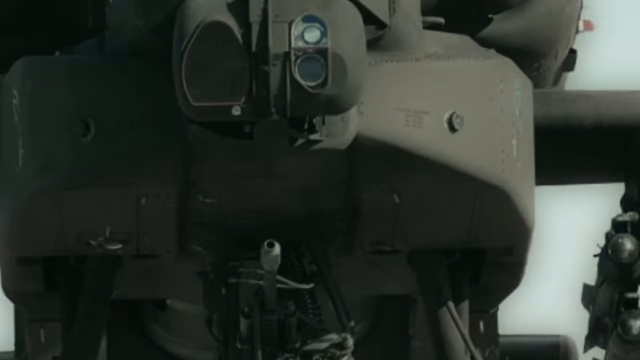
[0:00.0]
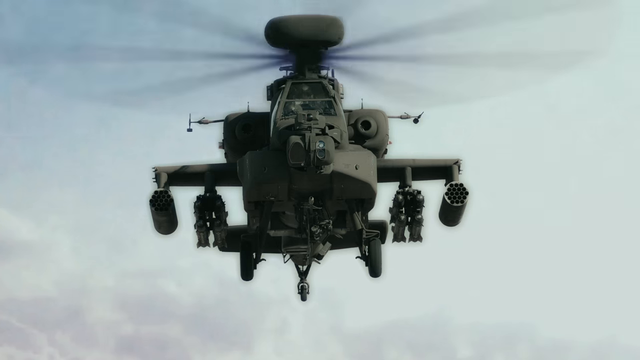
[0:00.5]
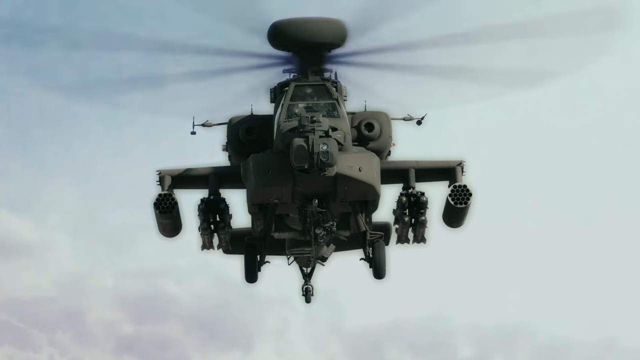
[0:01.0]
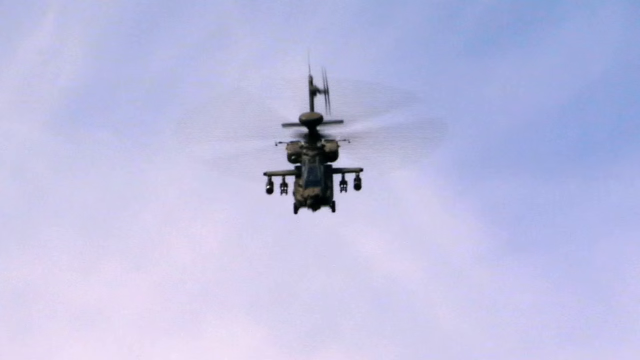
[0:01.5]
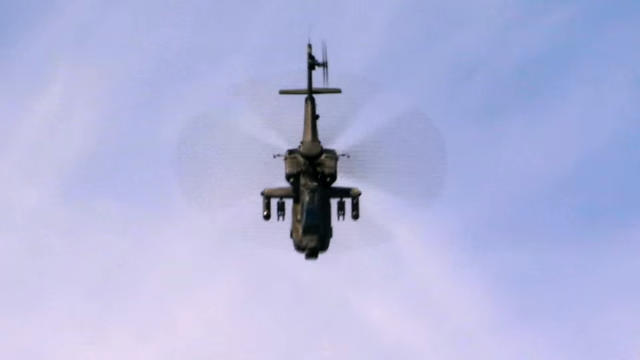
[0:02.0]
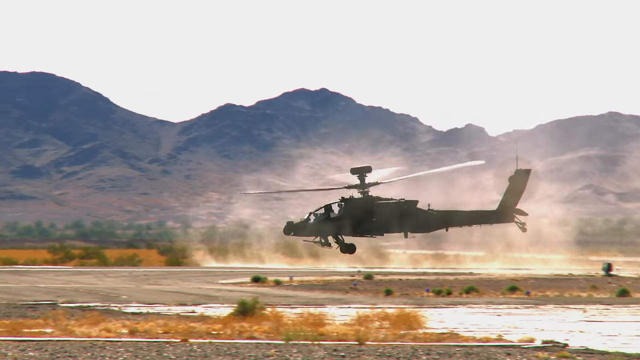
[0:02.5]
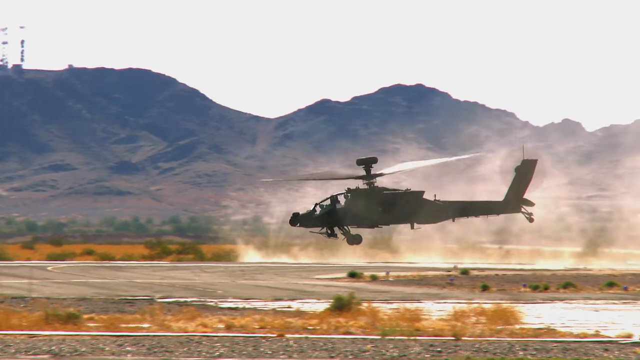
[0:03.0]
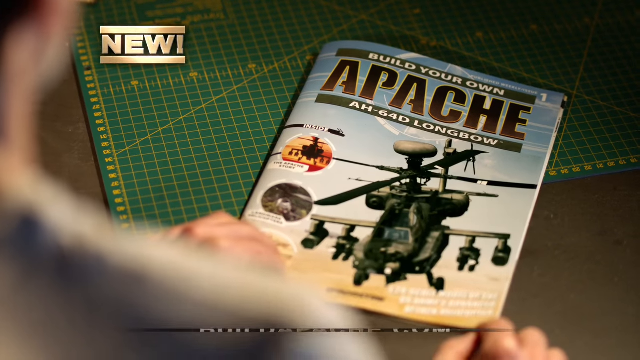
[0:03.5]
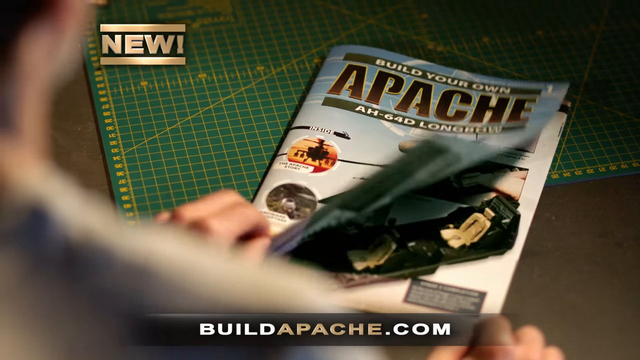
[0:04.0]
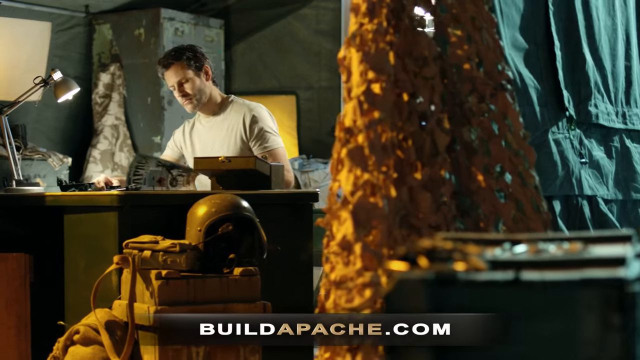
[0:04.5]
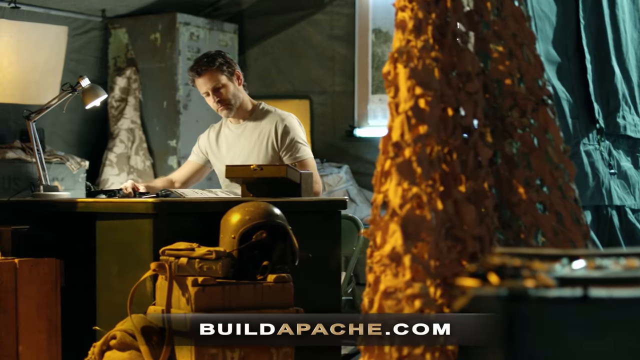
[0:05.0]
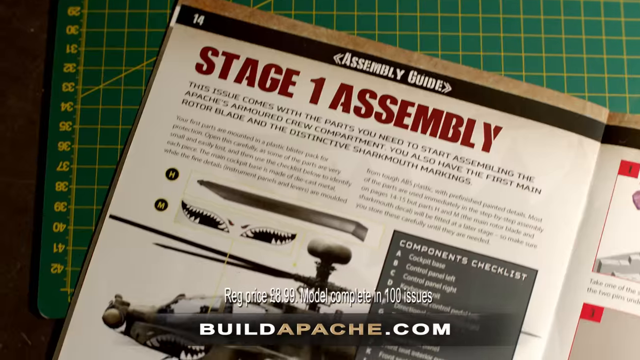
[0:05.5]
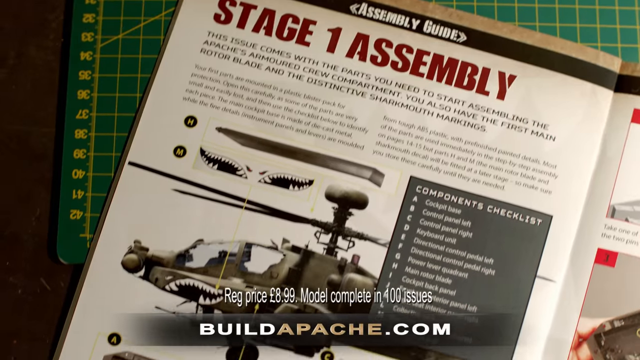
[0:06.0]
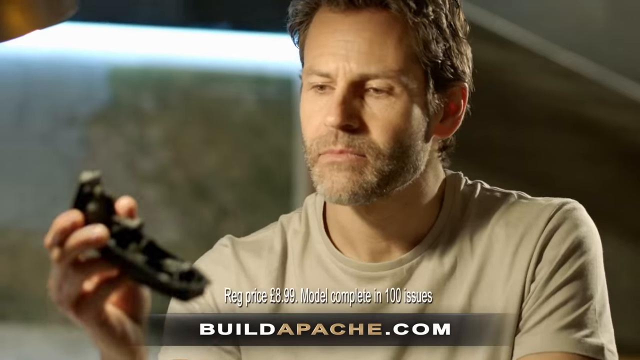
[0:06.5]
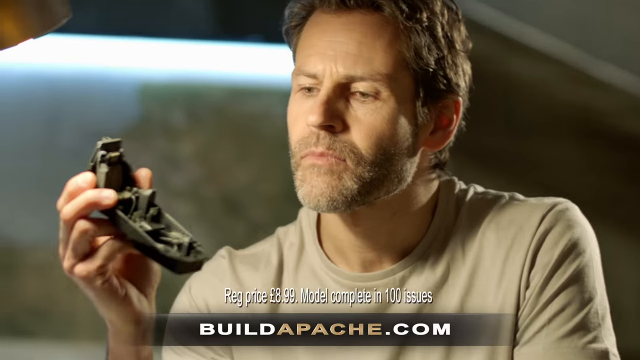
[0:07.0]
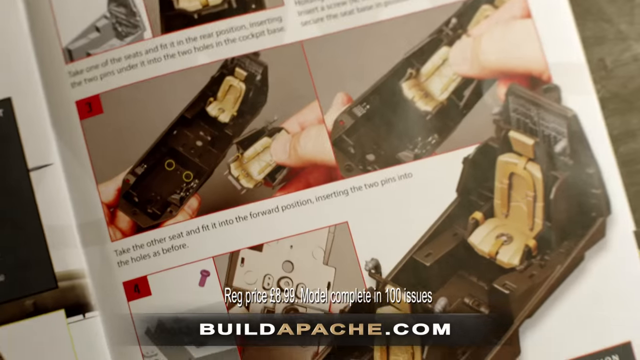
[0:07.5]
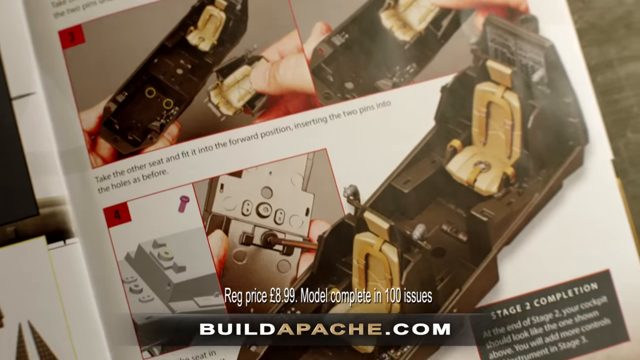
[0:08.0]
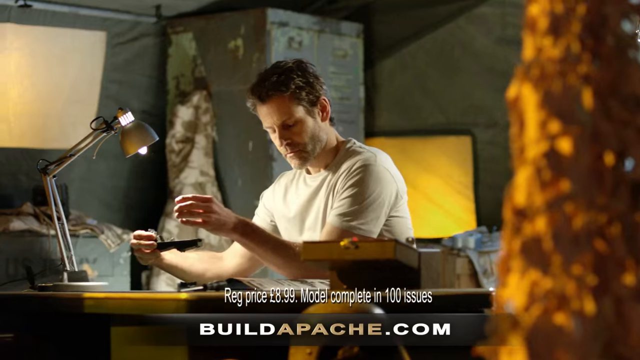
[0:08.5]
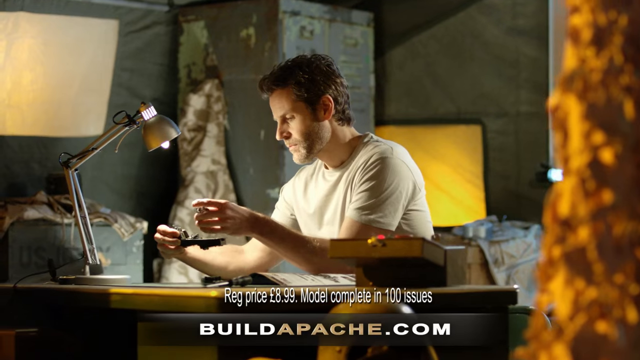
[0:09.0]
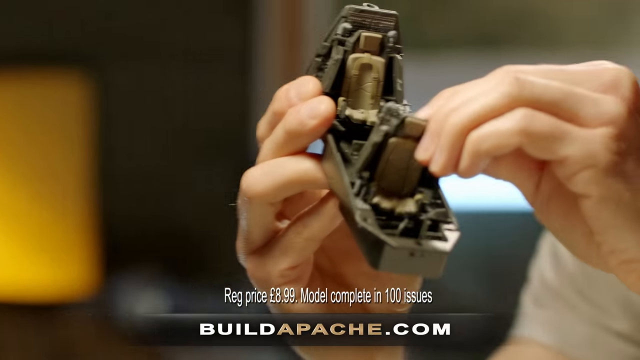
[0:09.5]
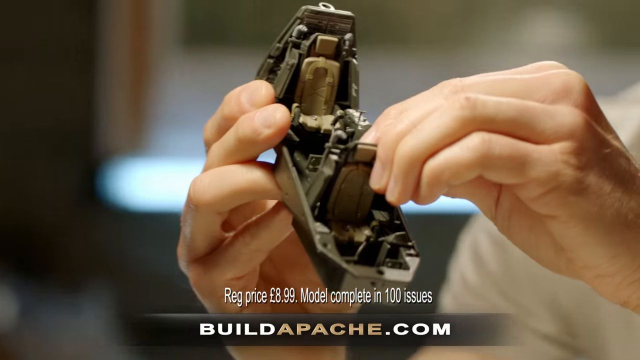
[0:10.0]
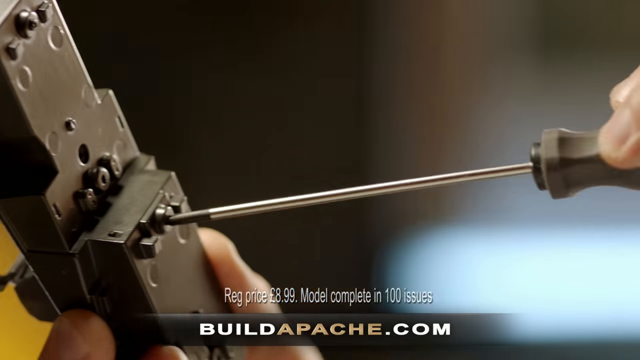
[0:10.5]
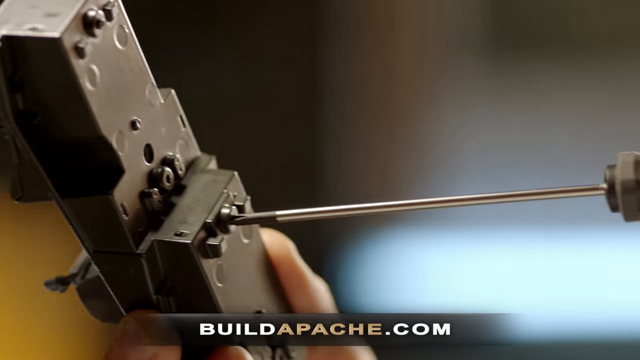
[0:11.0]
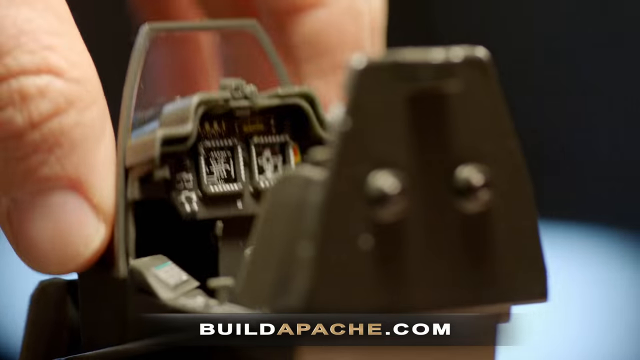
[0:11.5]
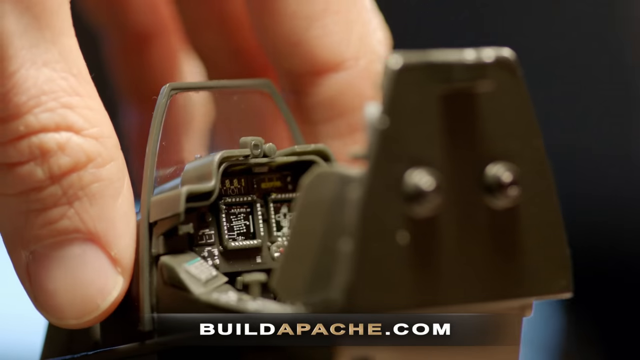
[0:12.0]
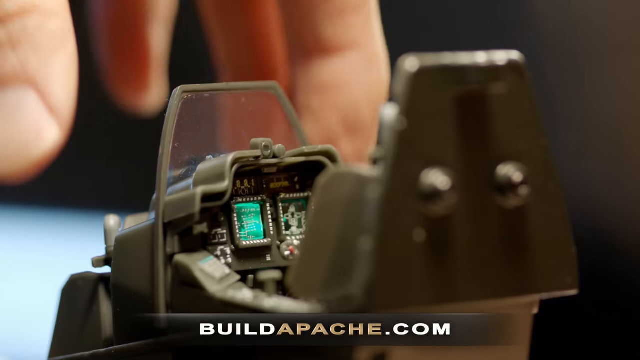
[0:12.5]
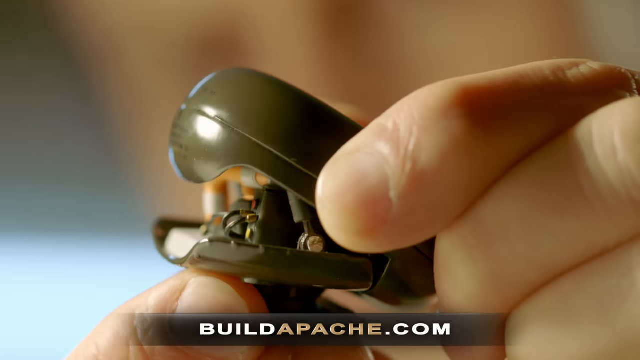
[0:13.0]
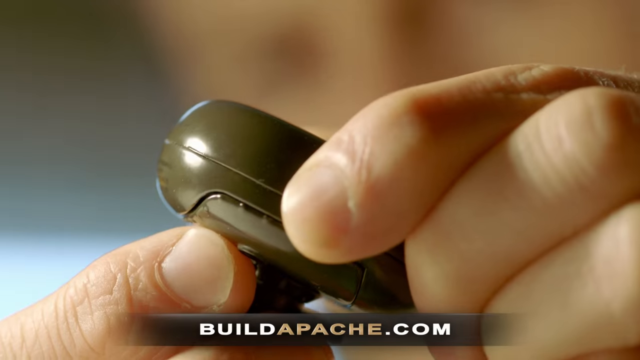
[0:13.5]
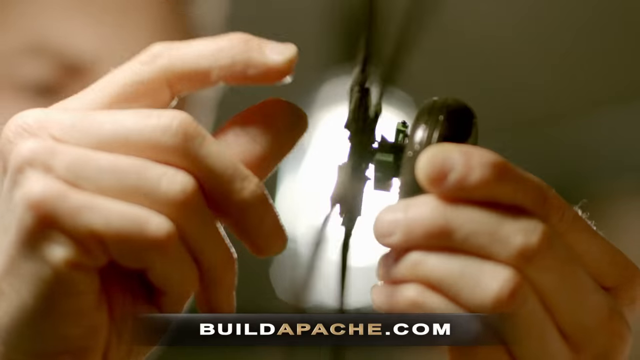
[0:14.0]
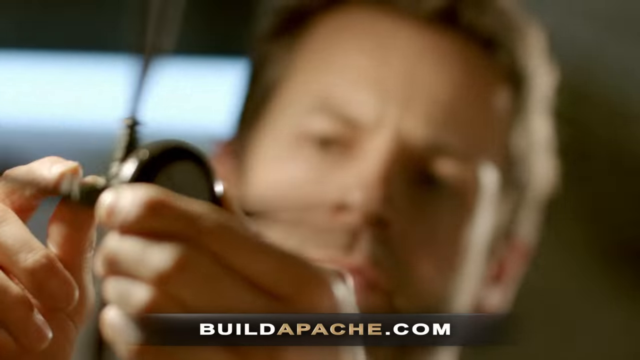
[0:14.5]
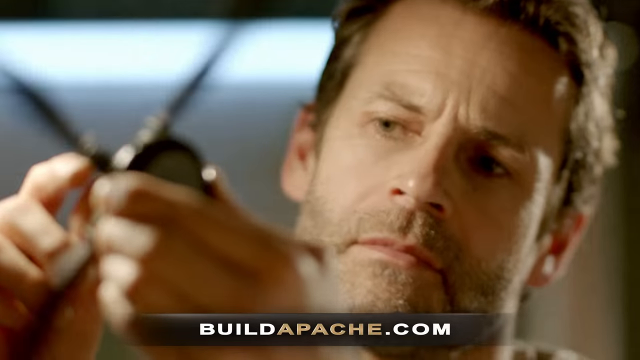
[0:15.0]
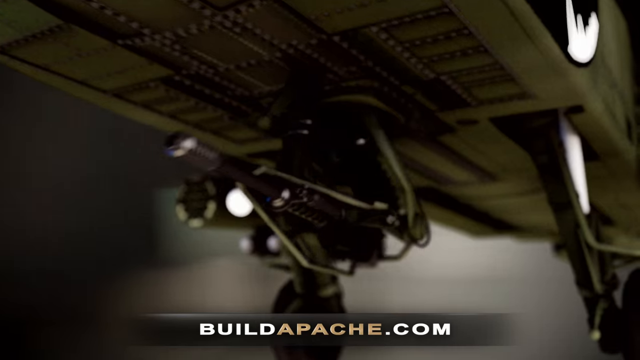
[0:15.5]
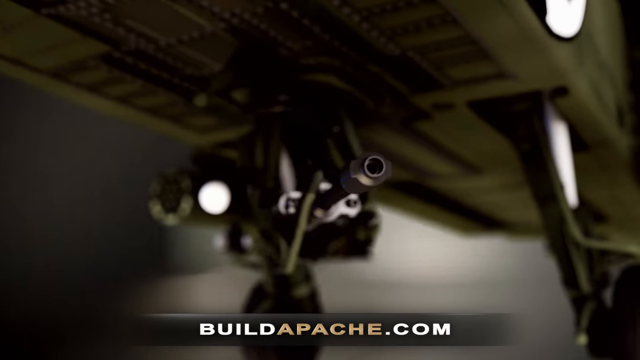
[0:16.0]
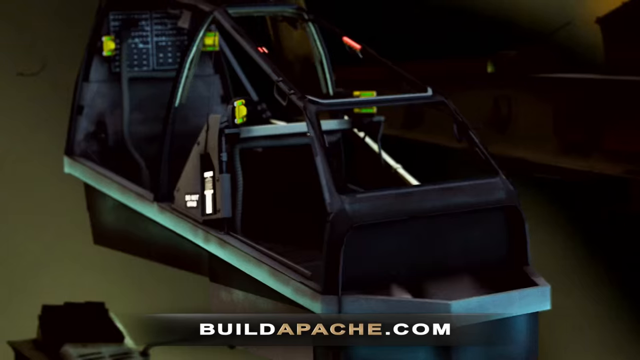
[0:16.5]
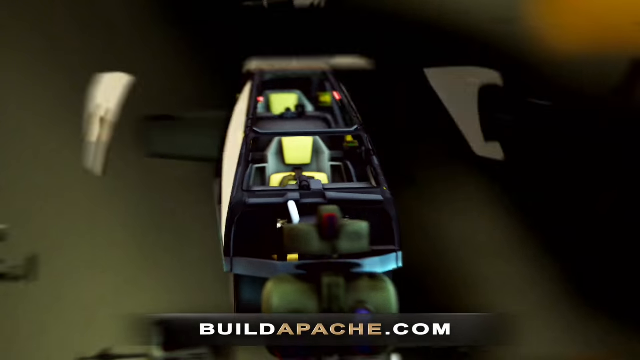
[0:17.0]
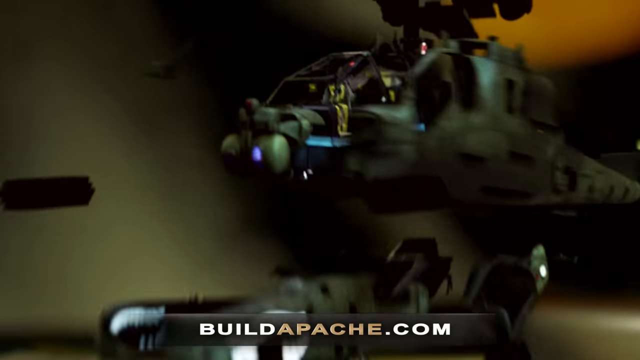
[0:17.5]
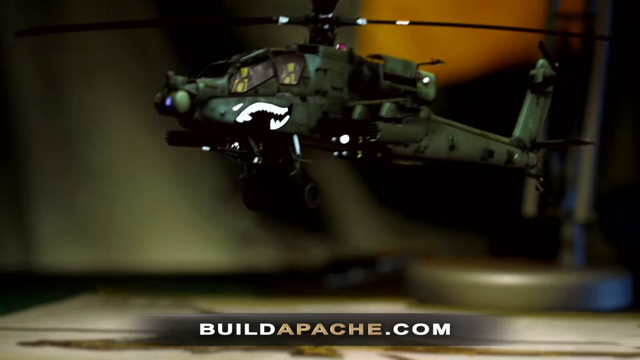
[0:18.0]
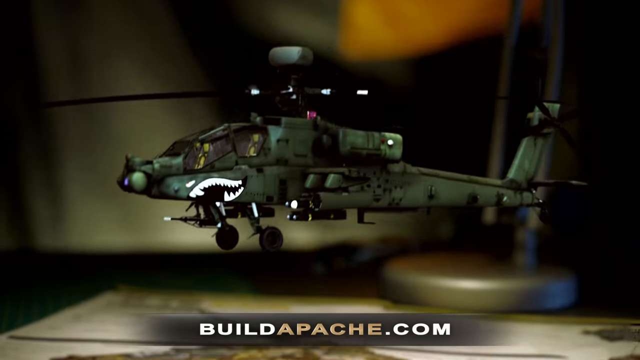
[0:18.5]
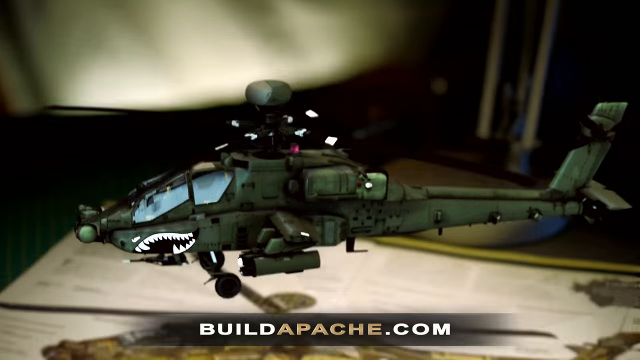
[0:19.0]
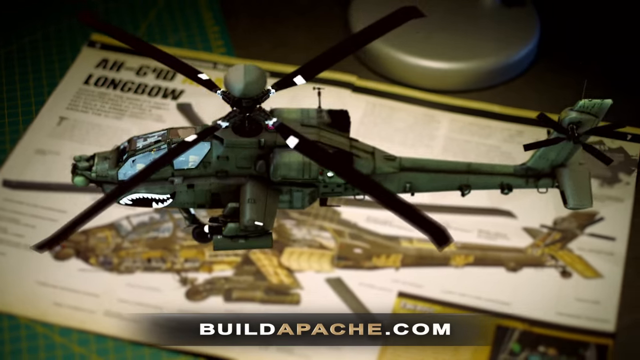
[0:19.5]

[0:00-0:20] A military chopper, an Apache, is shown head-on from the front, then from the top, and then from the side. The scene changes to an individual, and the view zooms in on the table, focusing on a magazine on it titled "build your own Apache." The individual opens the first page of the magazine. A zoomed-out shot shows a man who looks to be in his mid-40s sitting at a desk, with a lamp to his left on the desk and an open box to his right; the room he is in is not yet clear. Inside one of the pages is a red header reading "stage one assembly" and a gray checklist of components. He picks up a piece, and another page shows how to assemble the seats in the aircraft, with pictures in the magazine. The view zooms out and then zooms back in on his hands putting the seats into the aircraft. The price of the model pops up, reading "regular price is $8.99," apparently in euros. He uses a screwdriver, sets a piece in, and a little screen within the helicopter lights up green. Multiple pieces on the helicopter move as he builds it. An animated sequence then shows all the parts coming together to build the model Apache helicopter.